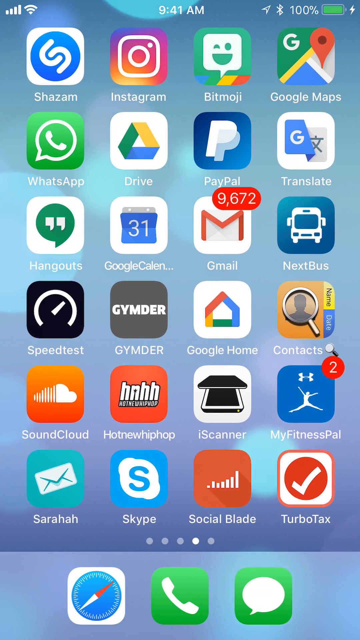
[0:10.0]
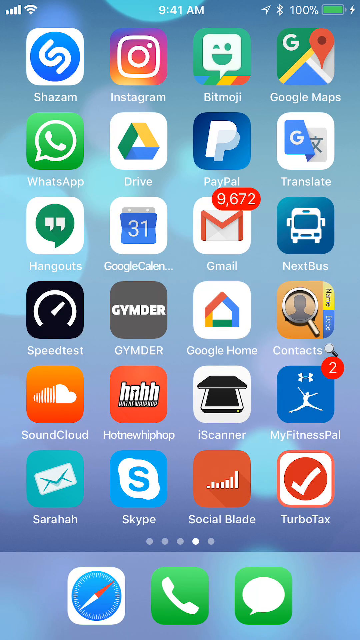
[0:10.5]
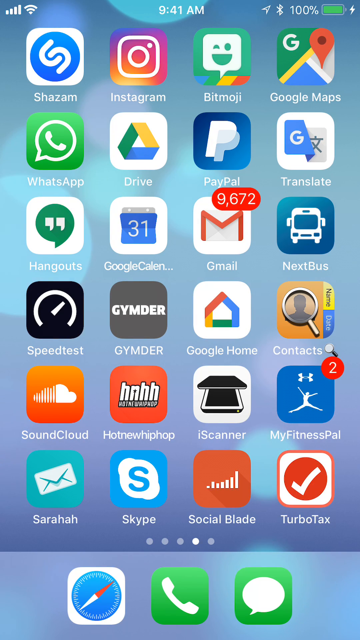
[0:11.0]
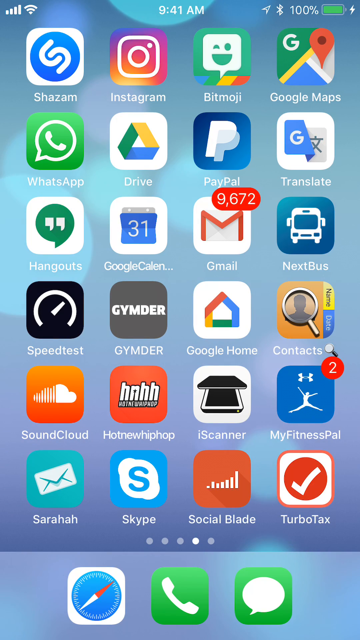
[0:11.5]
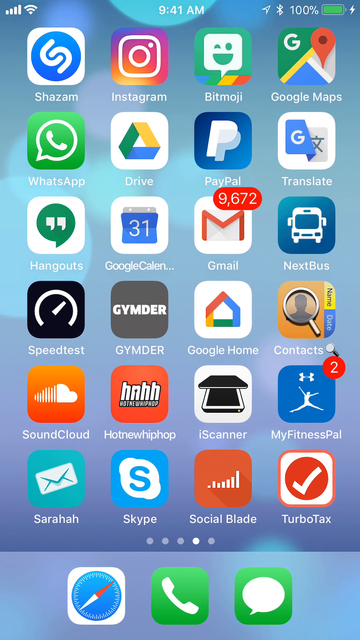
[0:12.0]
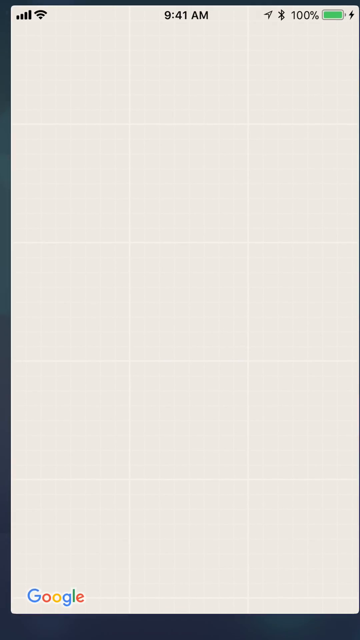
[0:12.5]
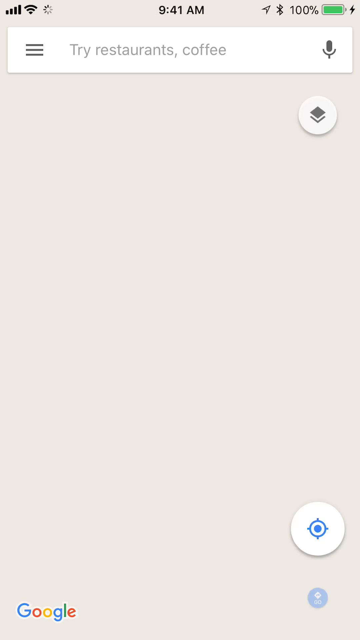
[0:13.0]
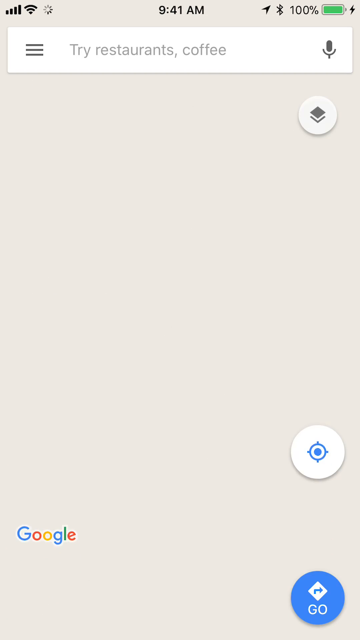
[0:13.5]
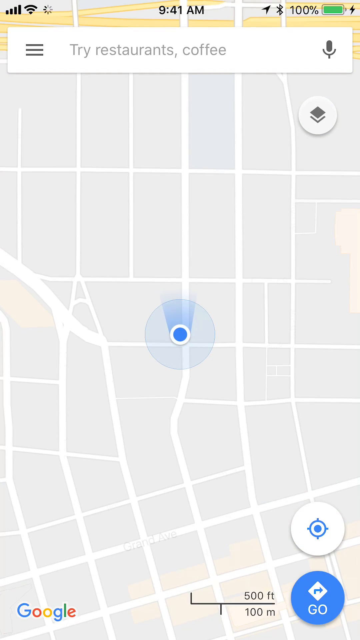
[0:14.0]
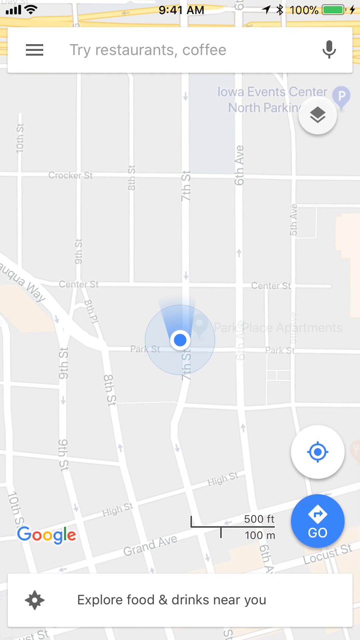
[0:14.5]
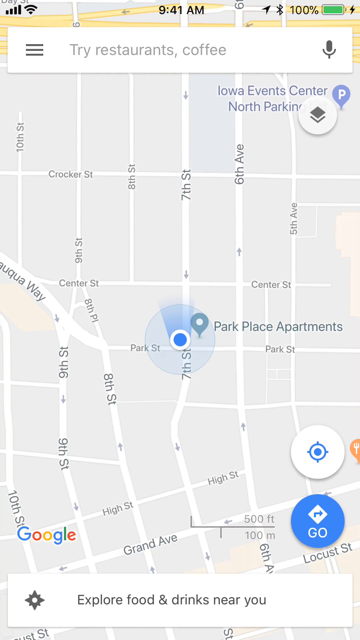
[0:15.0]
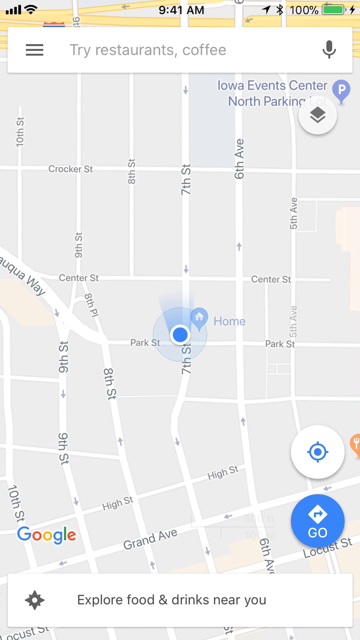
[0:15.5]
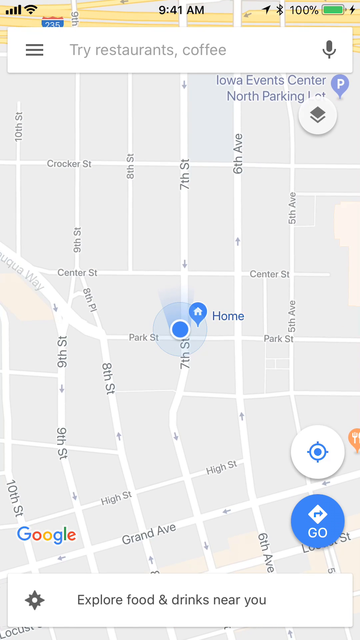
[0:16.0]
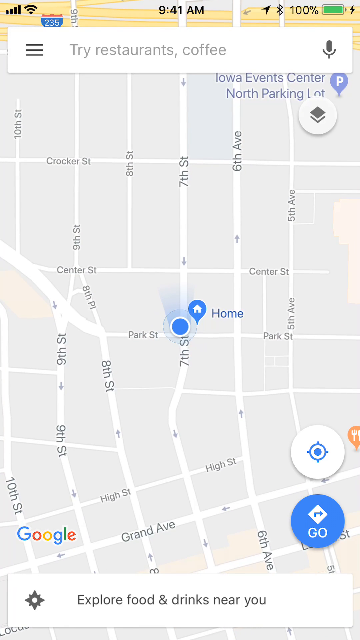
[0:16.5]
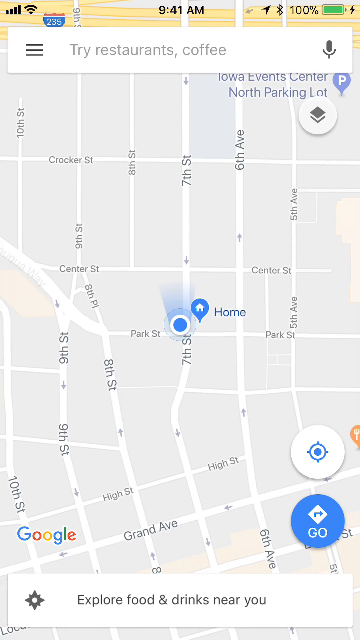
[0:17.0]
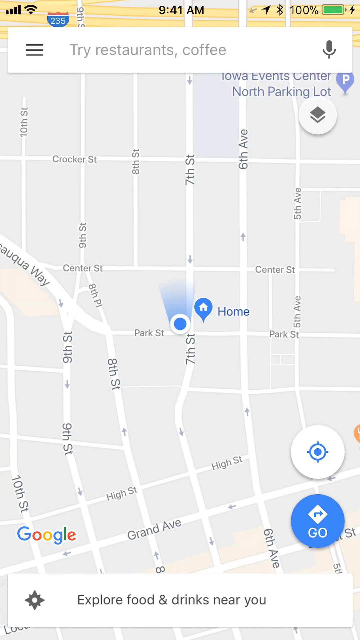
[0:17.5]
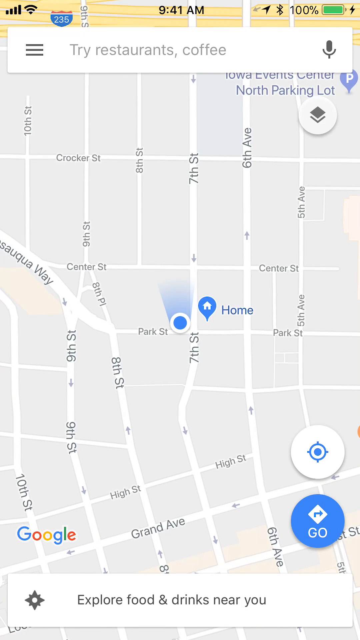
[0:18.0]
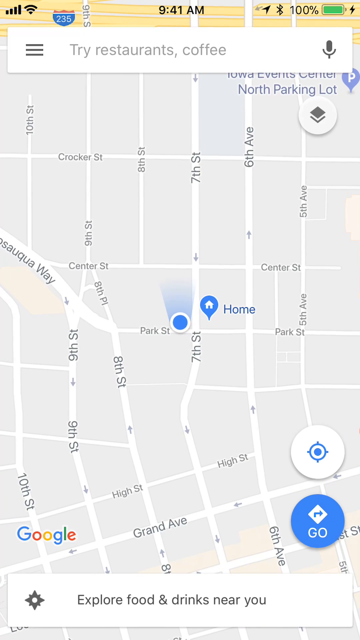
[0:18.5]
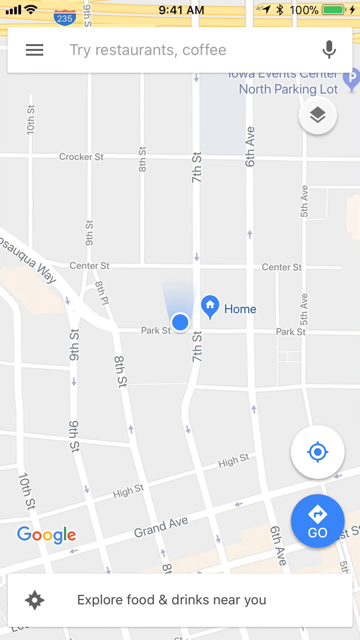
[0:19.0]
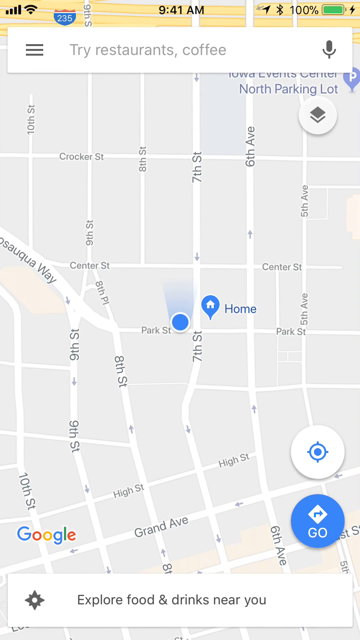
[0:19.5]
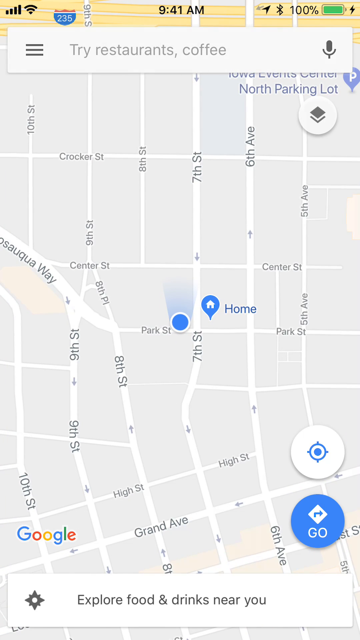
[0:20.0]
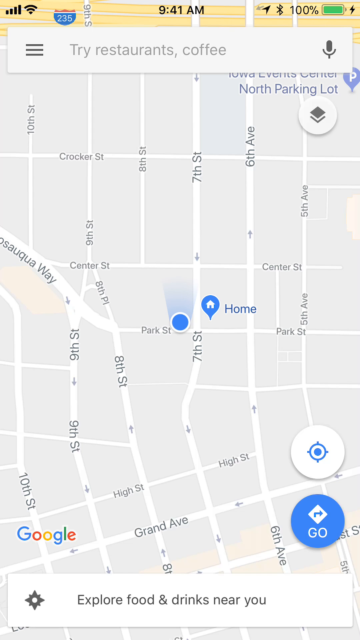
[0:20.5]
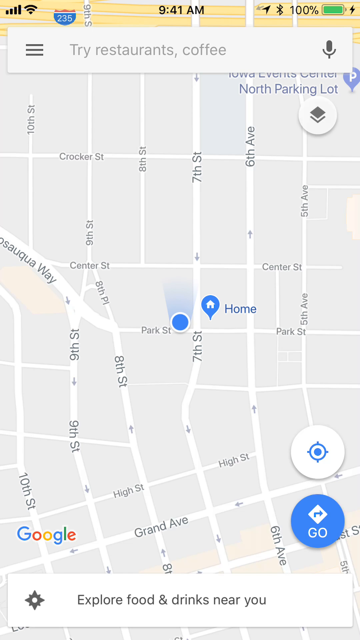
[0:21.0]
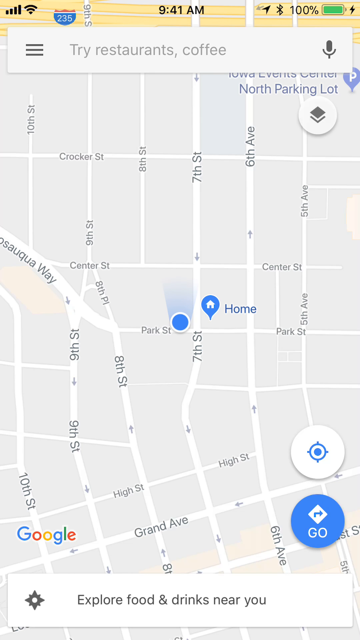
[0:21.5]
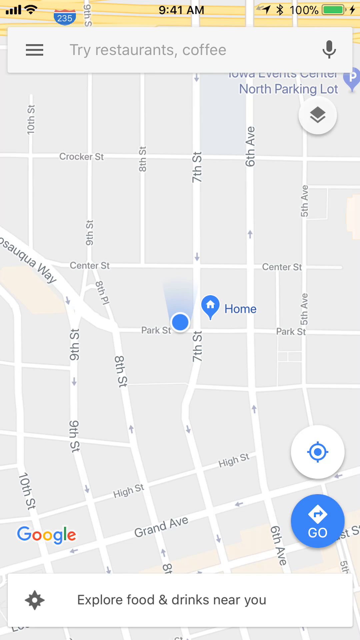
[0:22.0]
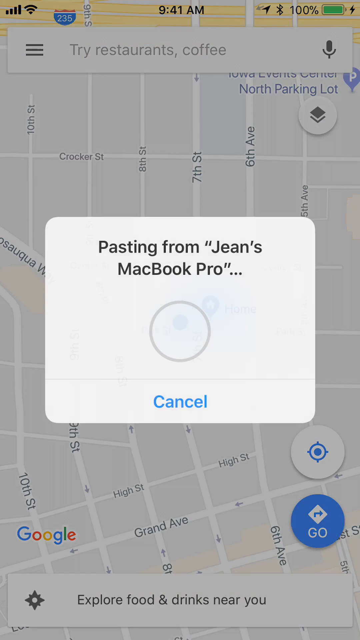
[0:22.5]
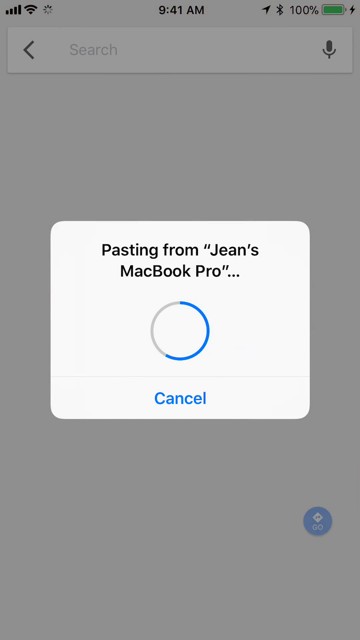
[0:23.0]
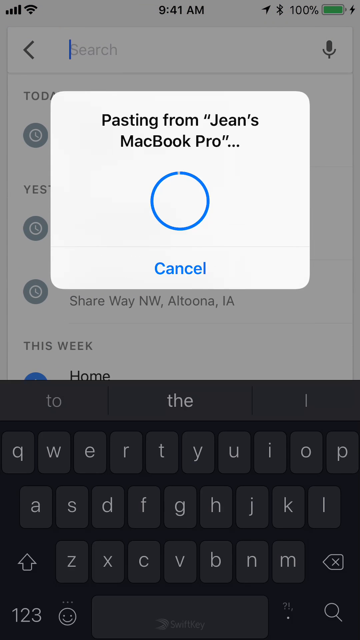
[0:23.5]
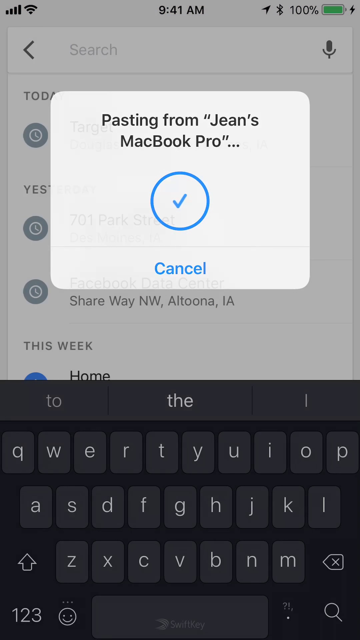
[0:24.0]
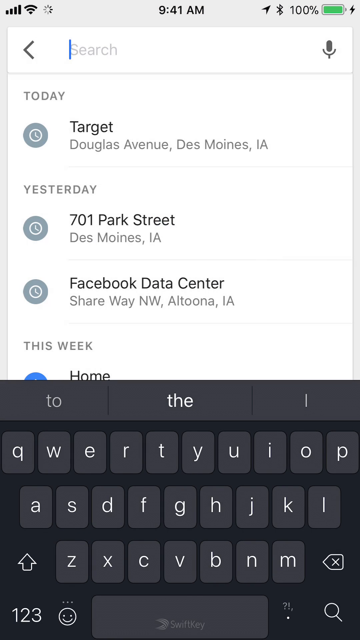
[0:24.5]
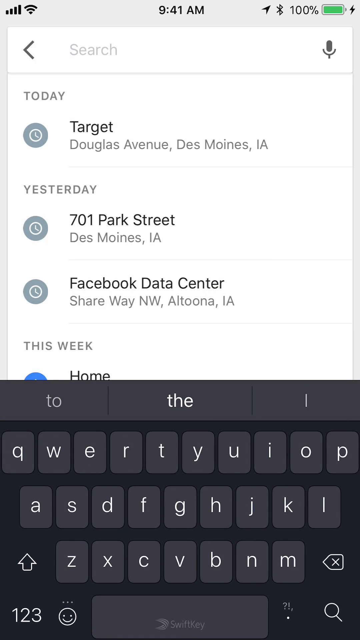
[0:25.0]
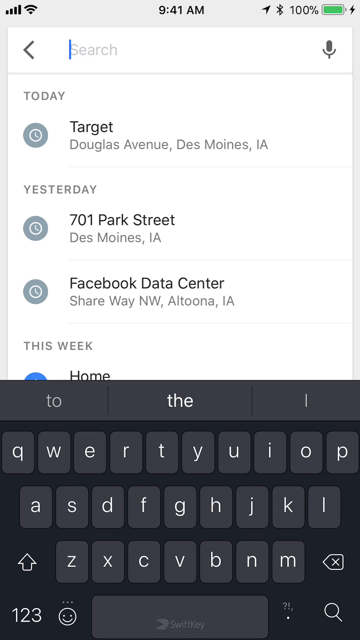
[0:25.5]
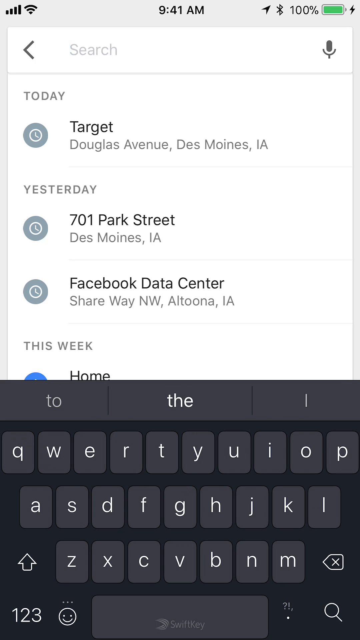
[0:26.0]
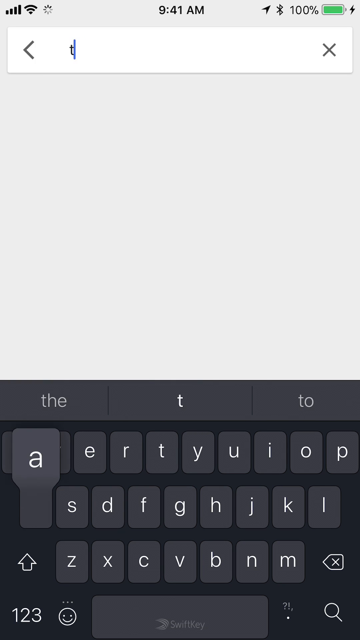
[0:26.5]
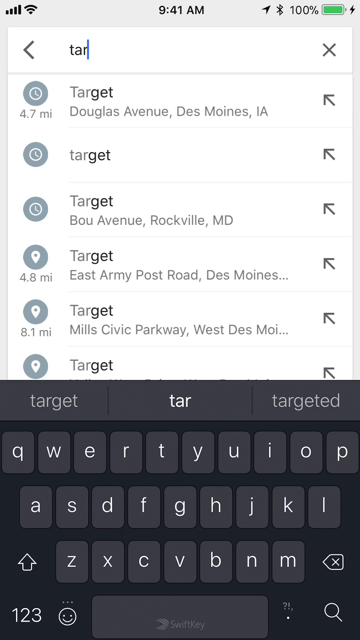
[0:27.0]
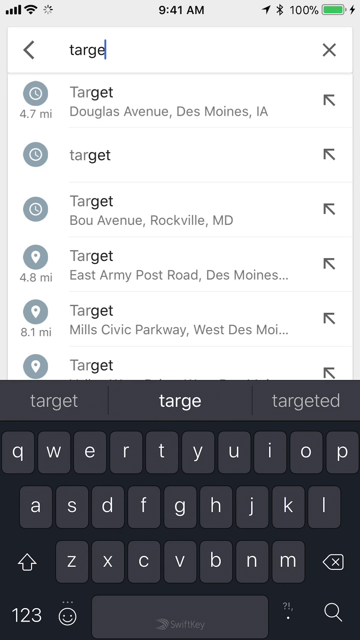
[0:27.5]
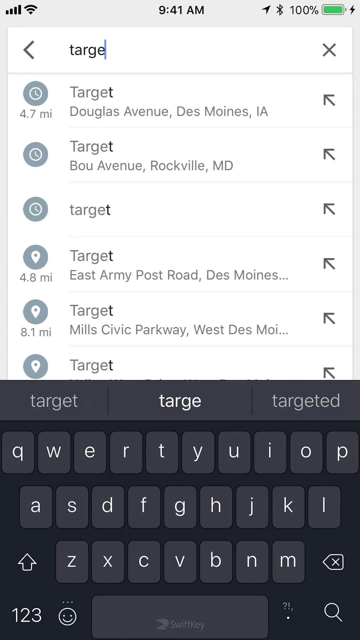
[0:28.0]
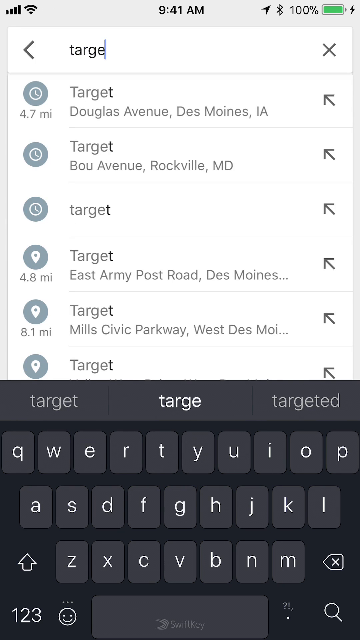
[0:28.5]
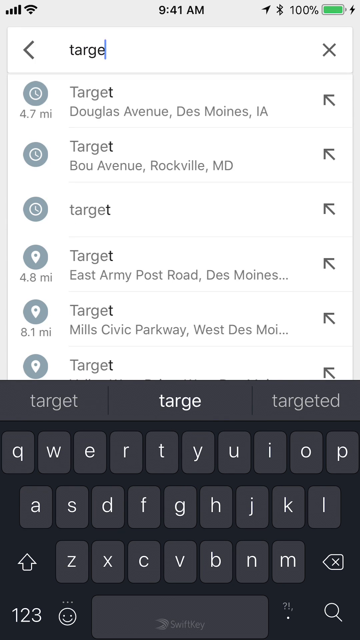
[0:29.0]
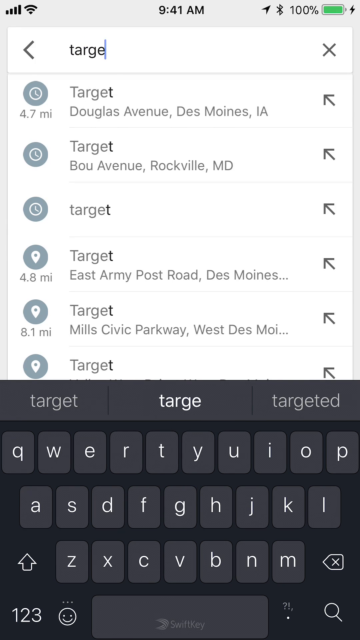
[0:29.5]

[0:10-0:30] From the same phone screen with the light blue background, the Google Maps app opens, with an icon representing the user in the center of the screen: a blue circle with a white ring around it, plus a blue area looking north. The user is located at Park Street and 7th Street, facing north toward 7th Street. The blue circle moves in real time to the west on Park Street, away from an icon that says "home". A pop-up appears saying "pasting from Jean's macbook pro", with a loading circle and the word "cancel" beneath it. The circle loads fully and turns blue, opening a search bar where the user begins typing the word "target". Multiple results appear showing various Target store locations, where the user can get directions or view each store's address.